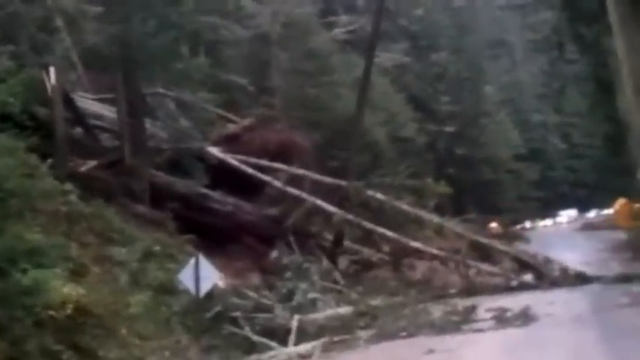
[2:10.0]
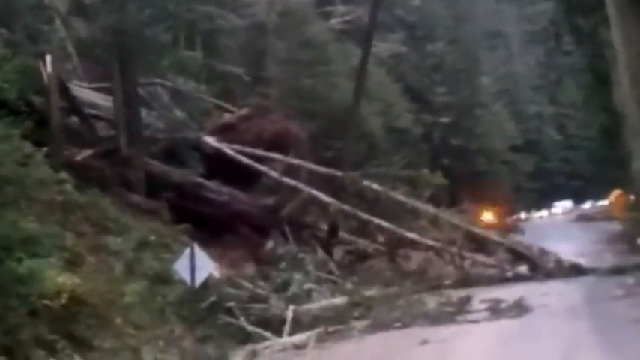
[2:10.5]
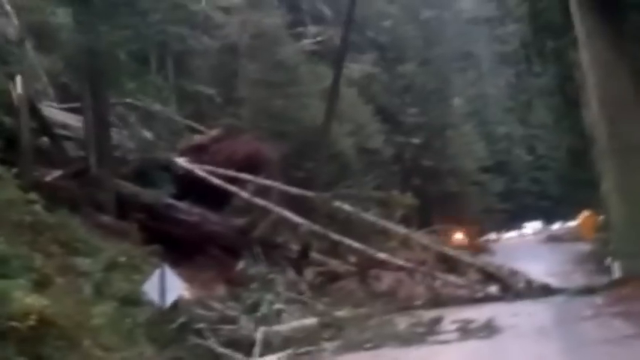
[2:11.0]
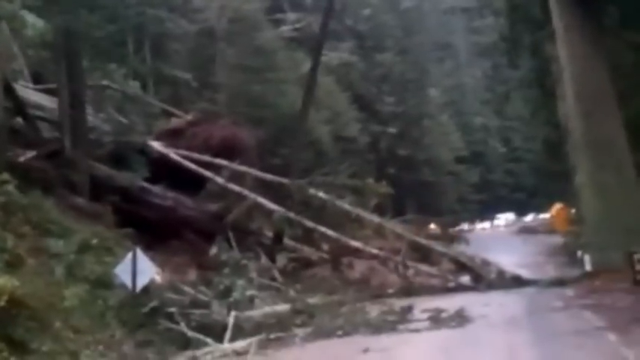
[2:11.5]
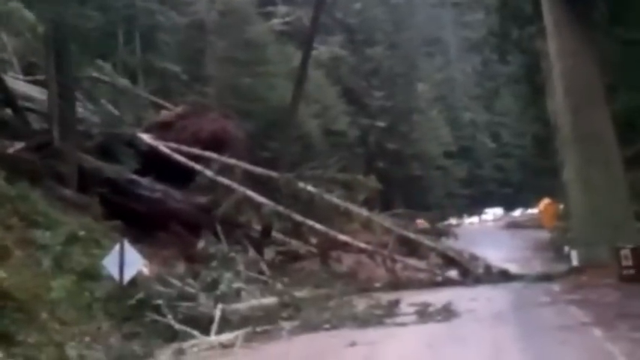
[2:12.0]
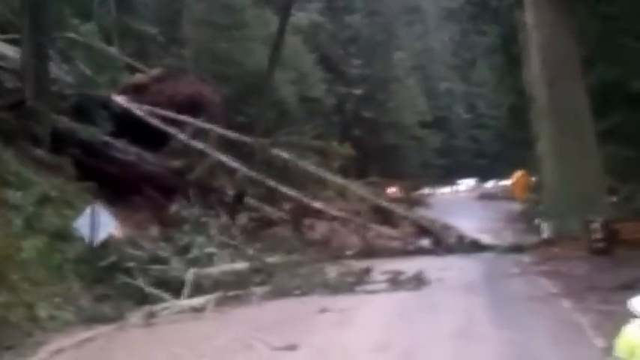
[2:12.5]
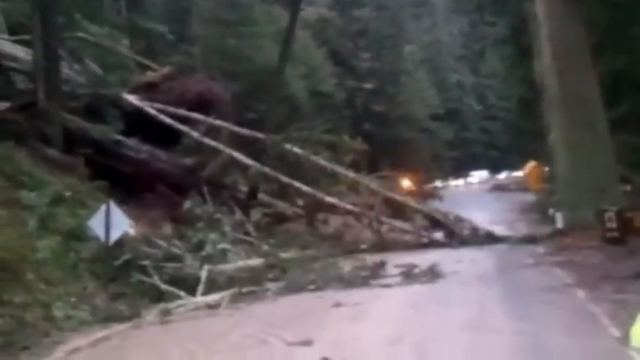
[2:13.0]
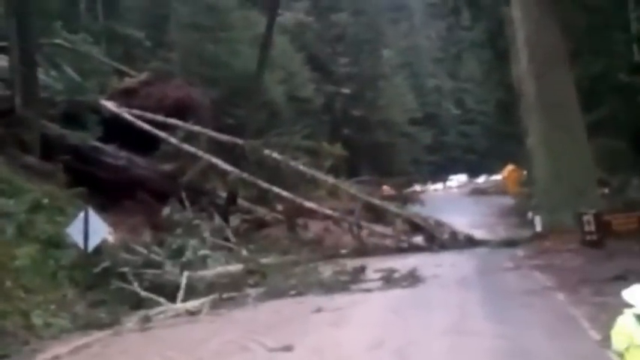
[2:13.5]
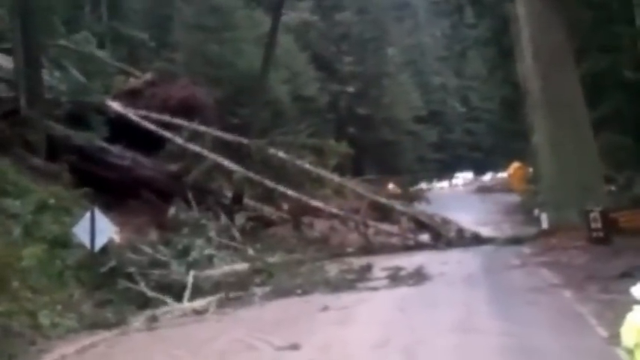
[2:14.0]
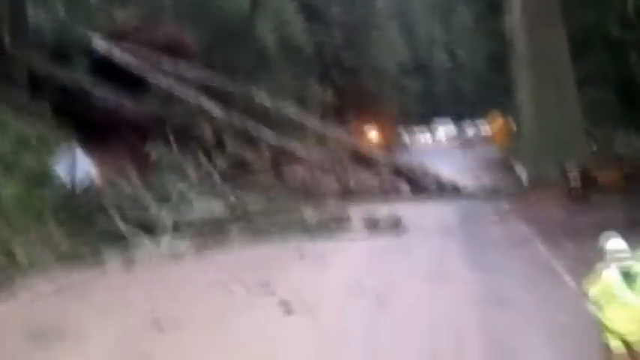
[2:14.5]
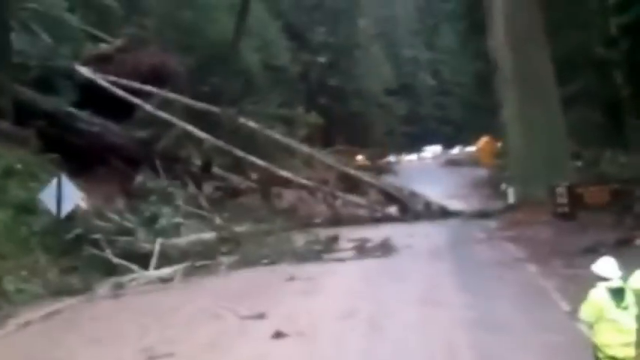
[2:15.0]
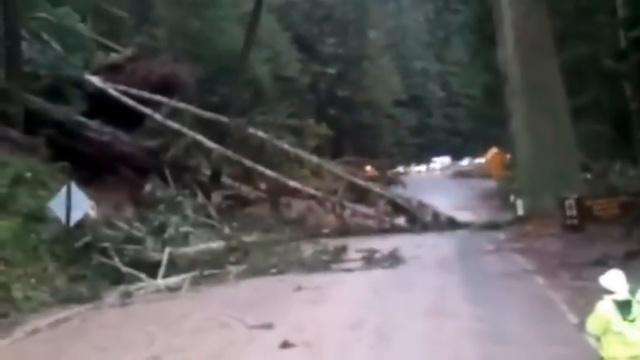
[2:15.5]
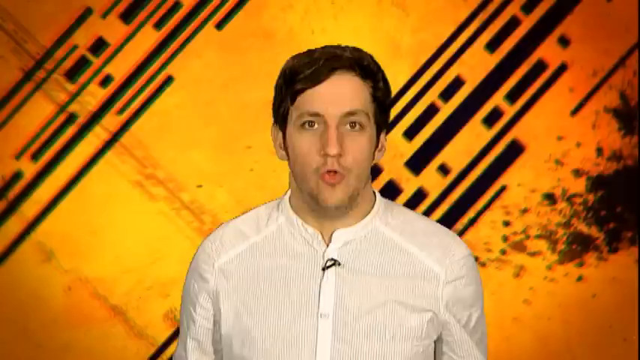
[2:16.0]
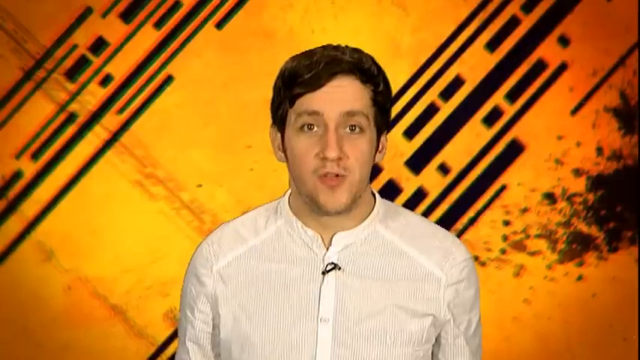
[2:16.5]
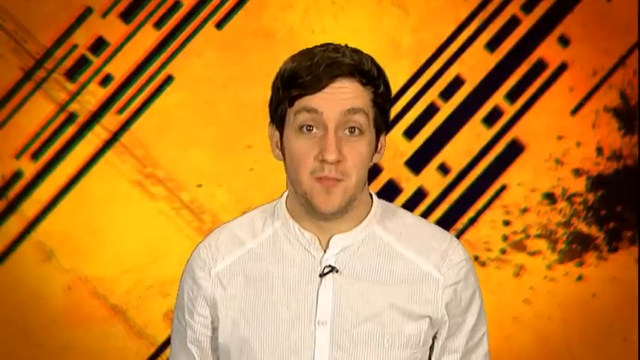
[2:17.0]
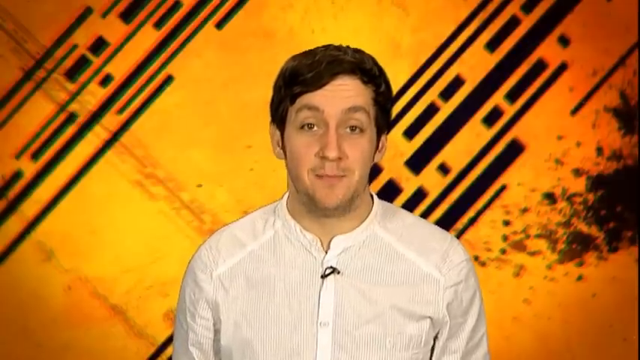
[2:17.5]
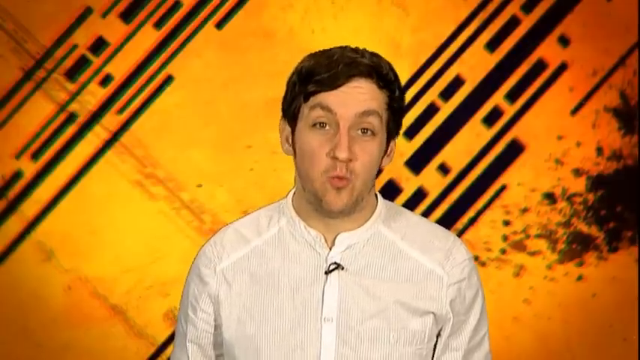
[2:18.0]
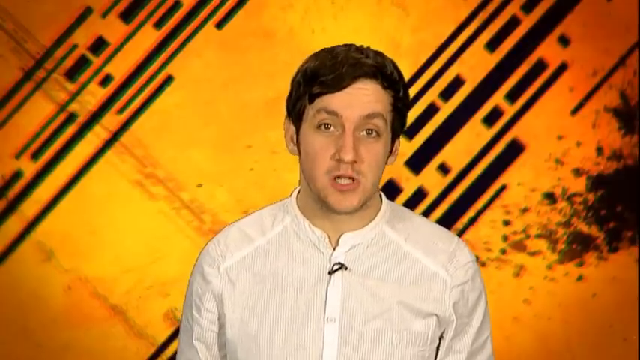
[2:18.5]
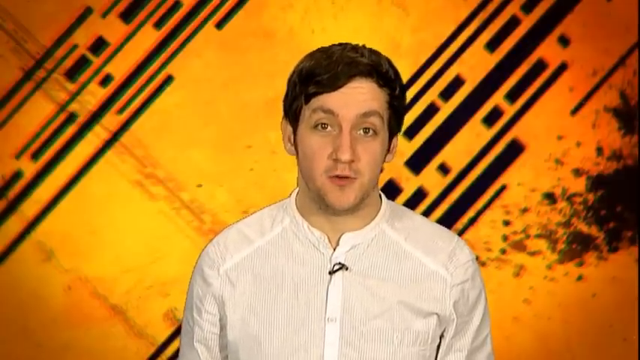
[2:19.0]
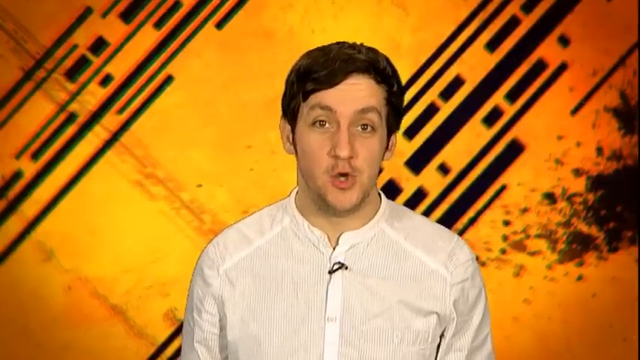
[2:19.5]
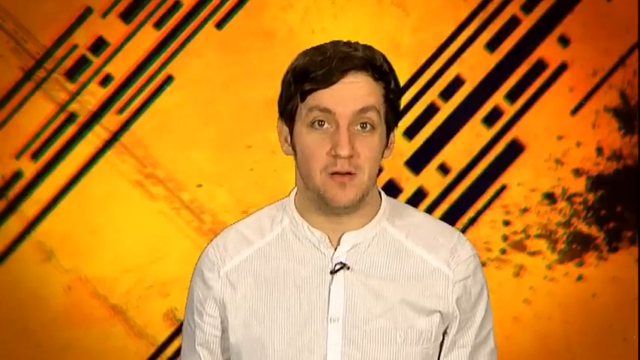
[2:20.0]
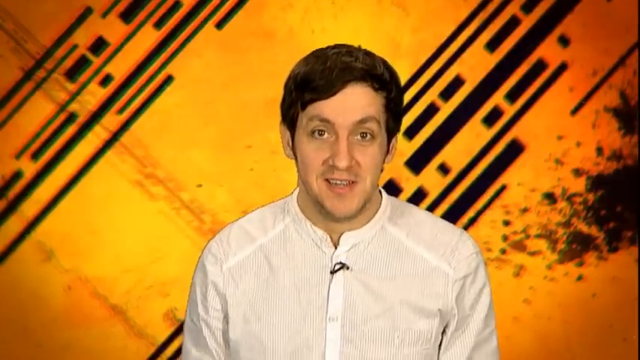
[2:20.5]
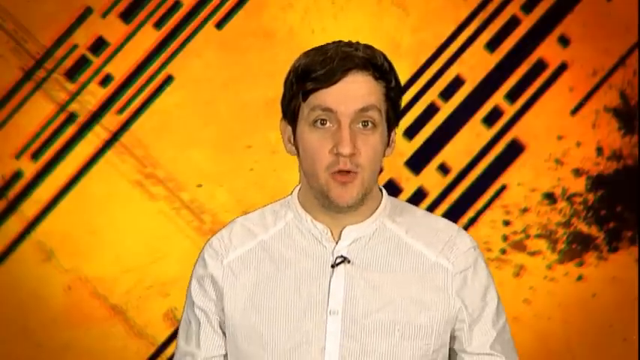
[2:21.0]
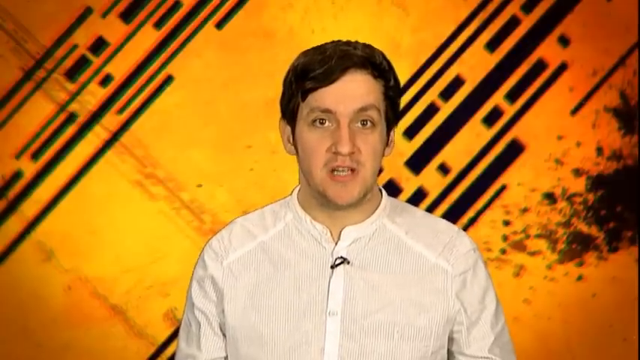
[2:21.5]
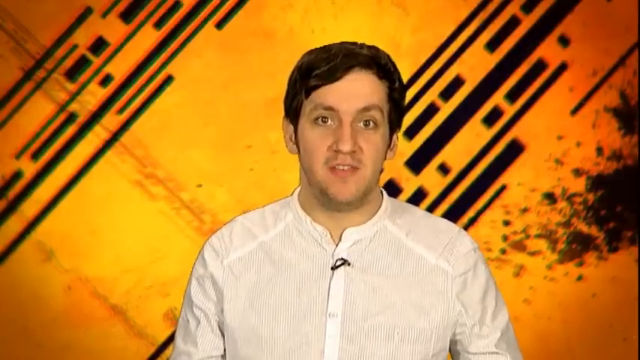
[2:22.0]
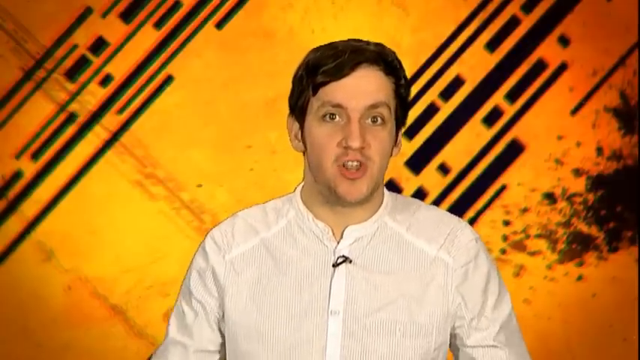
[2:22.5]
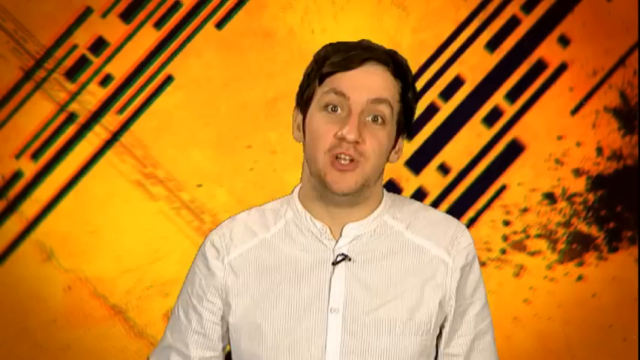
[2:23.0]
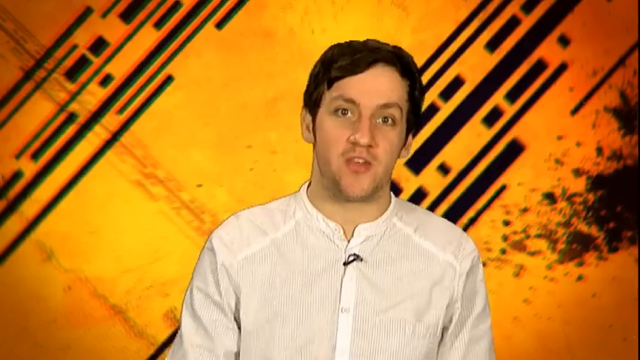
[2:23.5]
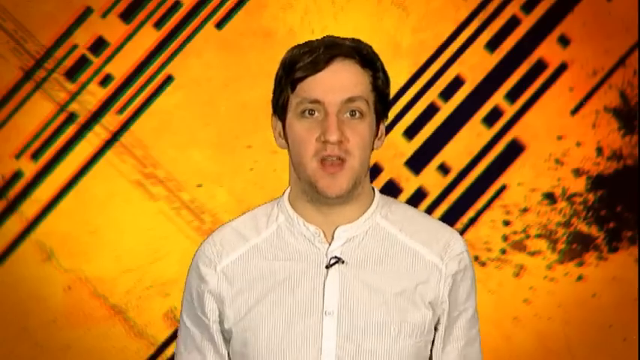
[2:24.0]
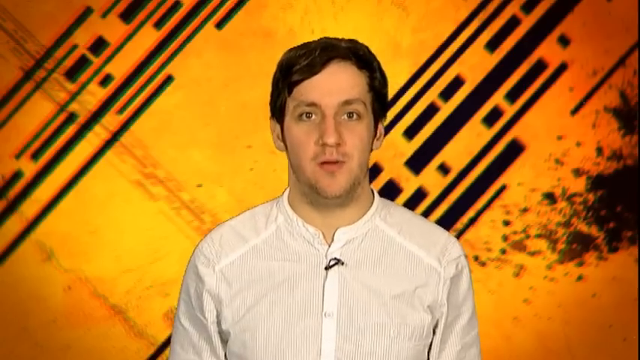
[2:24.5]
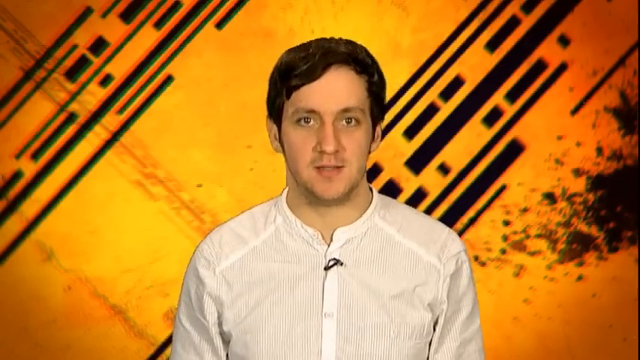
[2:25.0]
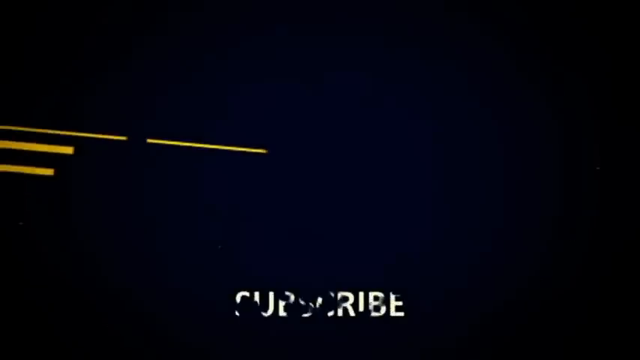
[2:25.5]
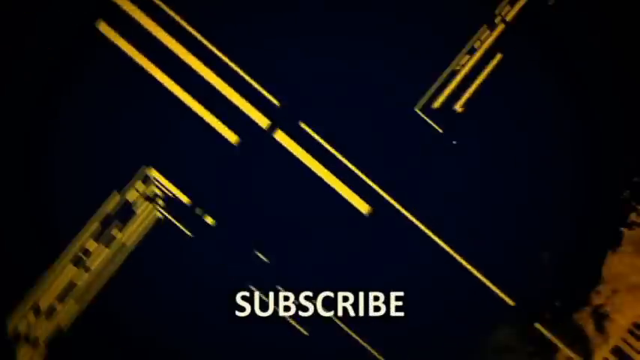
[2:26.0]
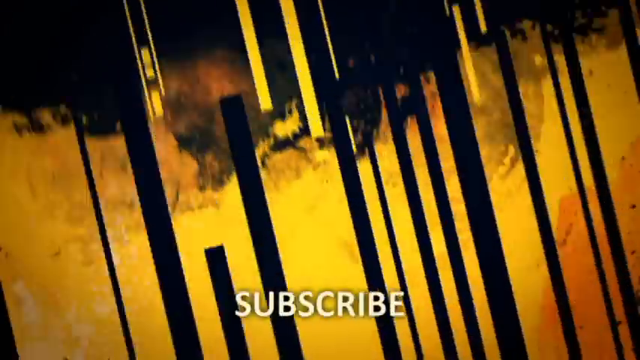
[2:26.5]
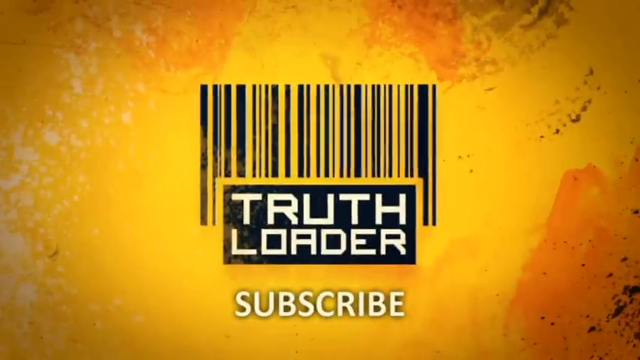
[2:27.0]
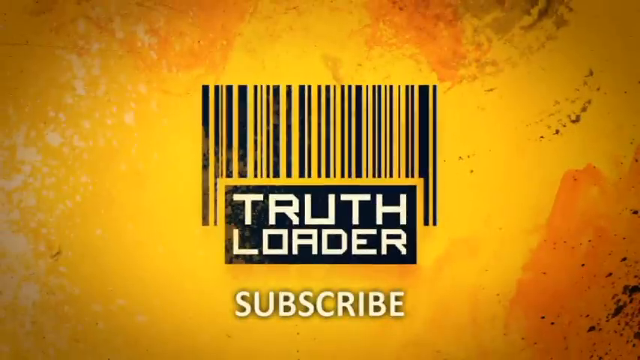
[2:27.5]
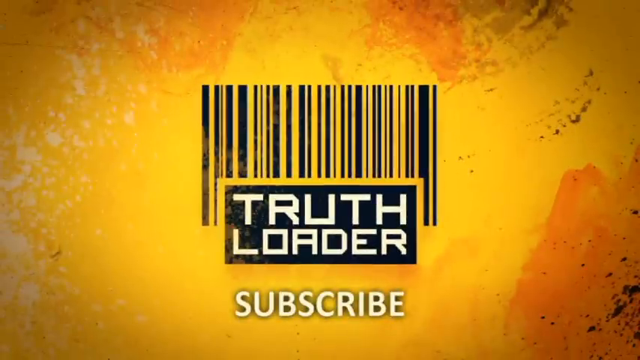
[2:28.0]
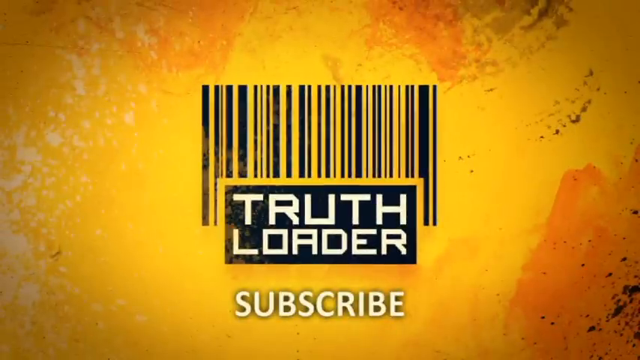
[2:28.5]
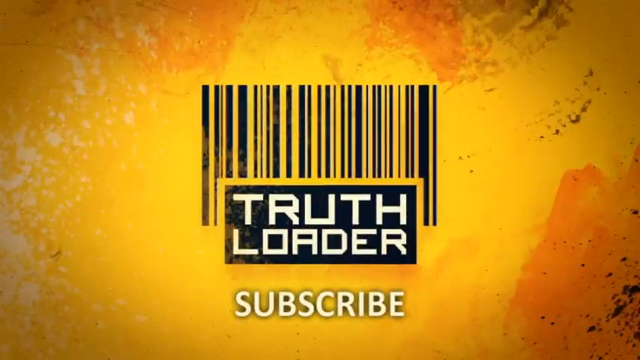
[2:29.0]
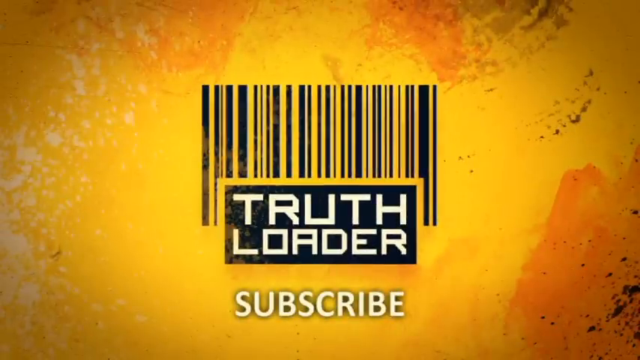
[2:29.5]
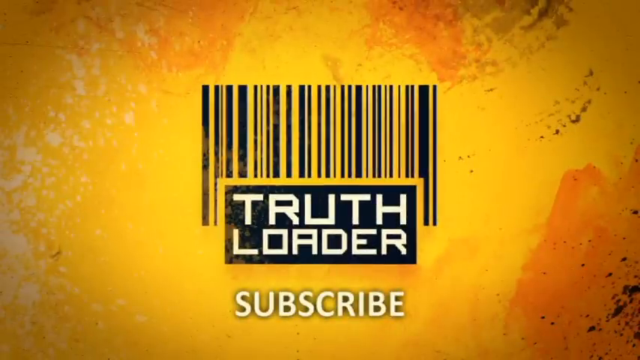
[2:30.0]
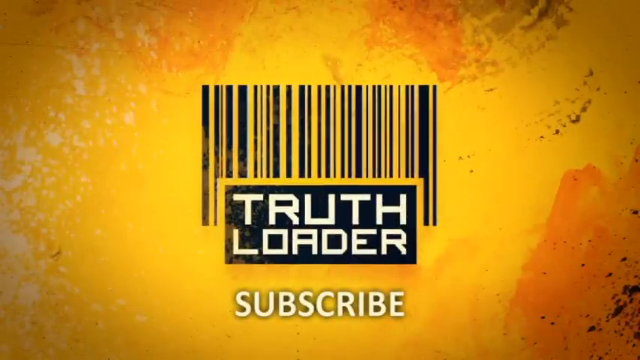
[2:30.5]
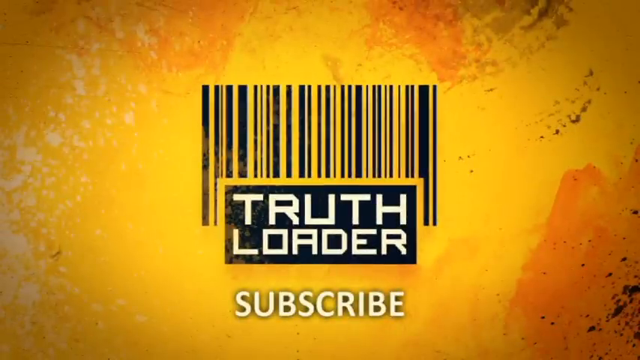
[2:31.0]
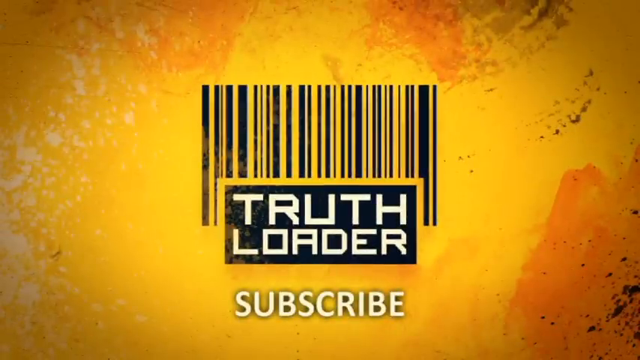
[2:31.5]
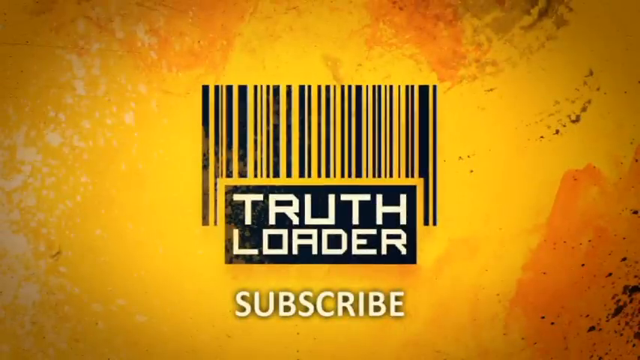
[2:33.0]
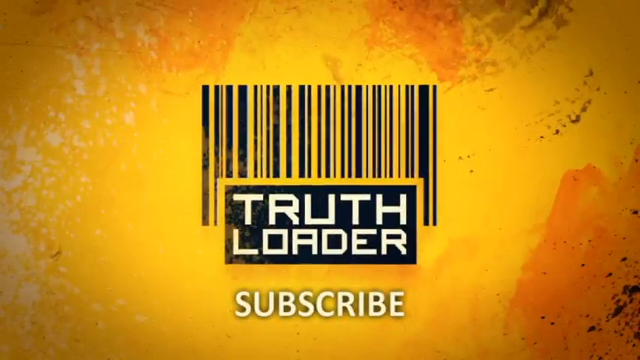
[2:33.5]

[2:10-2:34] Fallen trees cover the scene, and cars block off the end of the narrow road; one car has siren lights blinking orange. Two people in yellow suits and white helmets stand in place observing the scene without moving closer. The video then returns to a man with dark hair in a white button-down shirt, who speaks to close out the segment. It ends with a logo reading "Truth Loader" on a navy blue background.